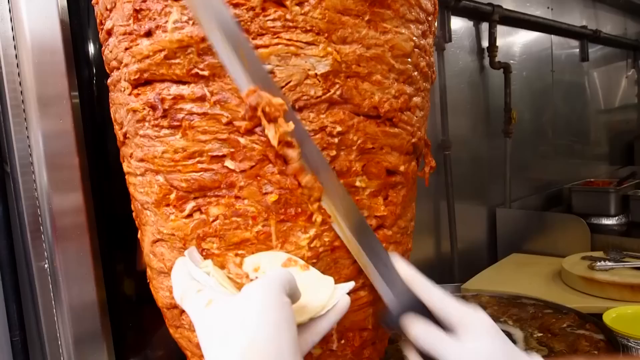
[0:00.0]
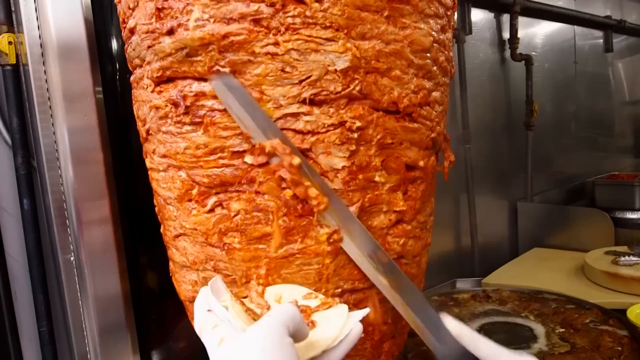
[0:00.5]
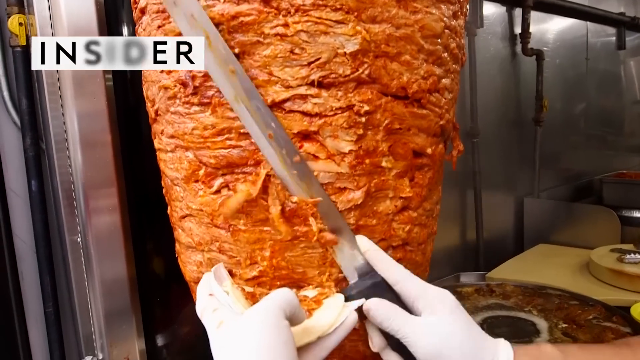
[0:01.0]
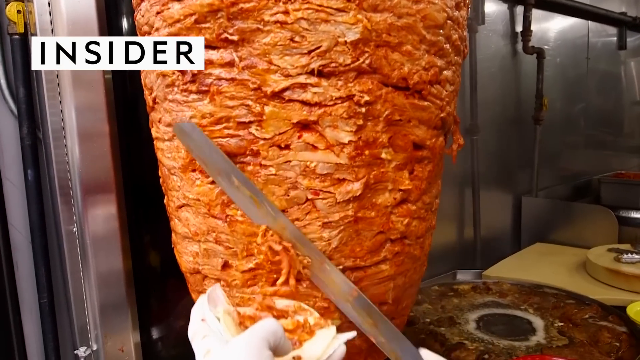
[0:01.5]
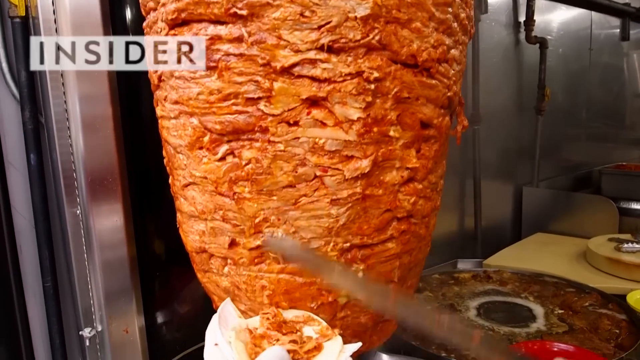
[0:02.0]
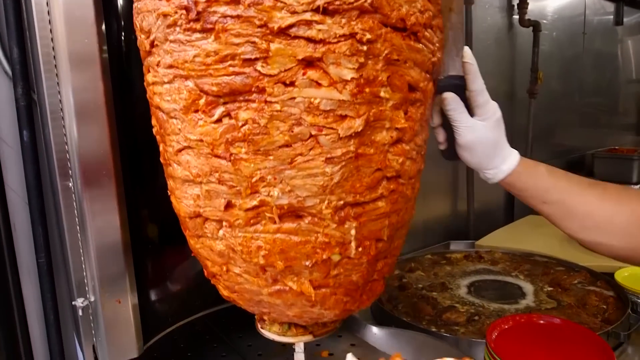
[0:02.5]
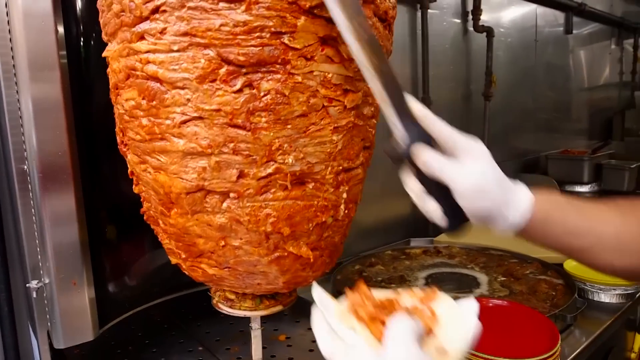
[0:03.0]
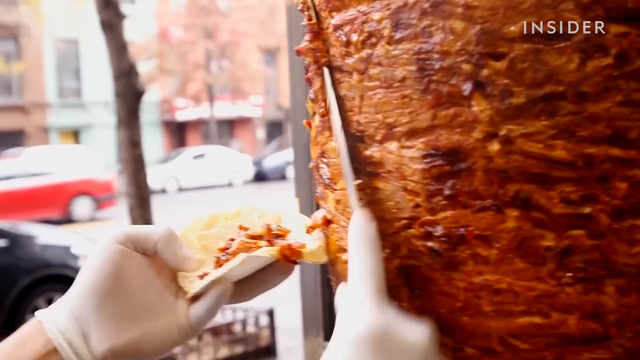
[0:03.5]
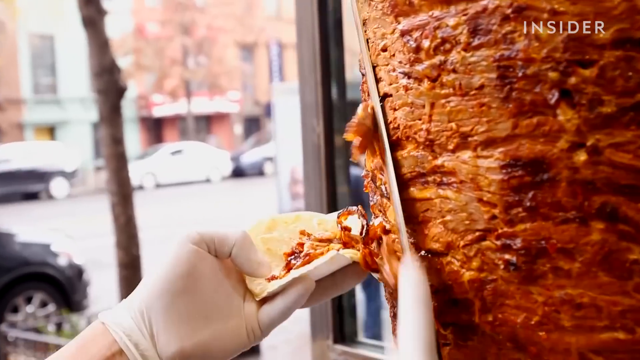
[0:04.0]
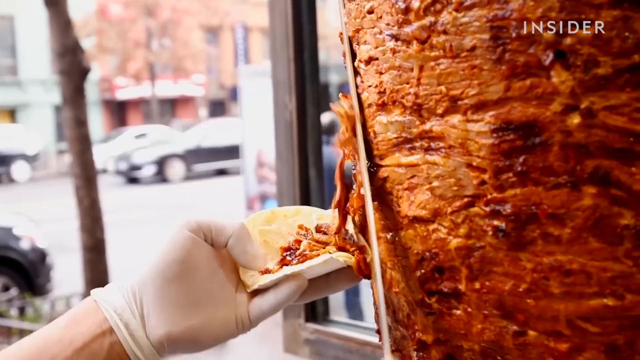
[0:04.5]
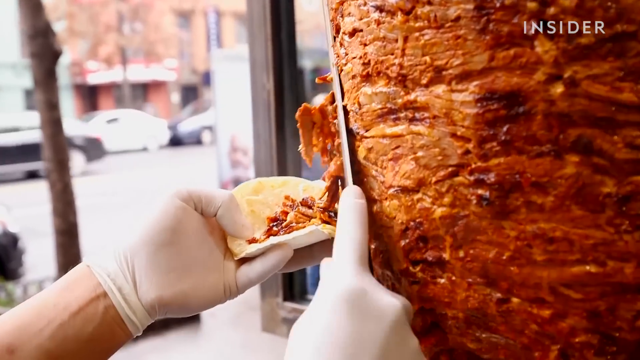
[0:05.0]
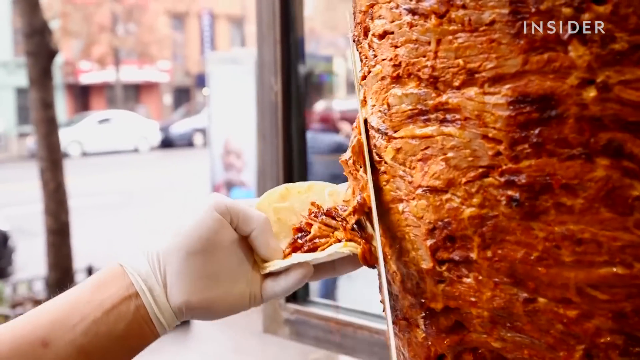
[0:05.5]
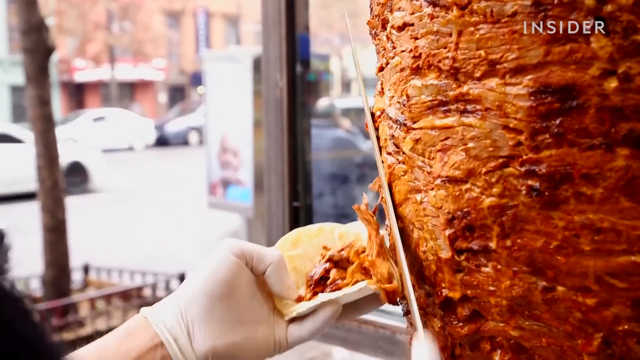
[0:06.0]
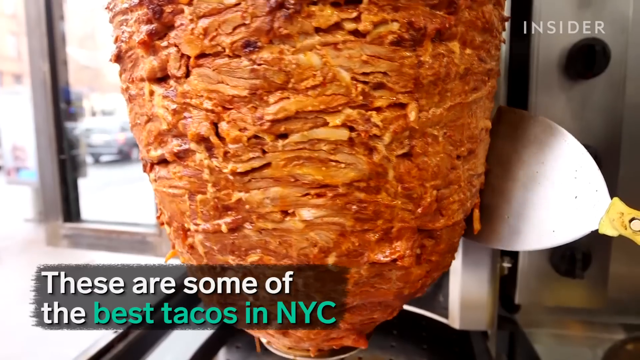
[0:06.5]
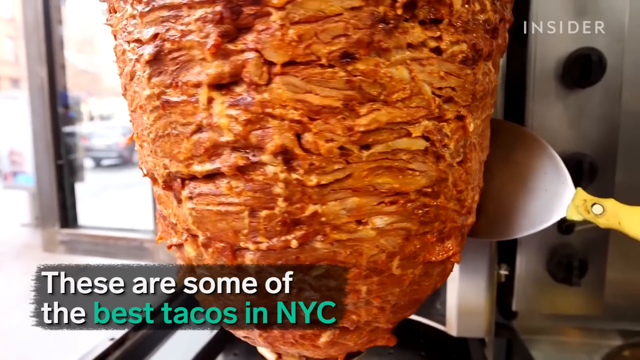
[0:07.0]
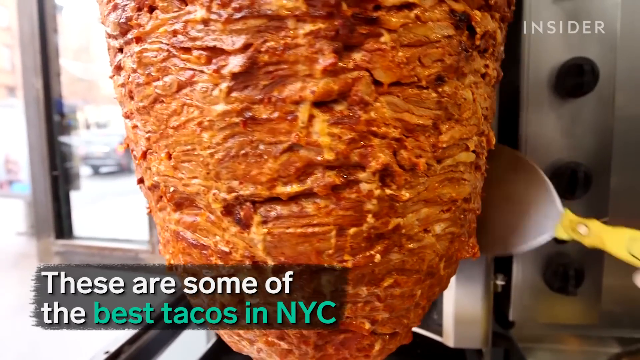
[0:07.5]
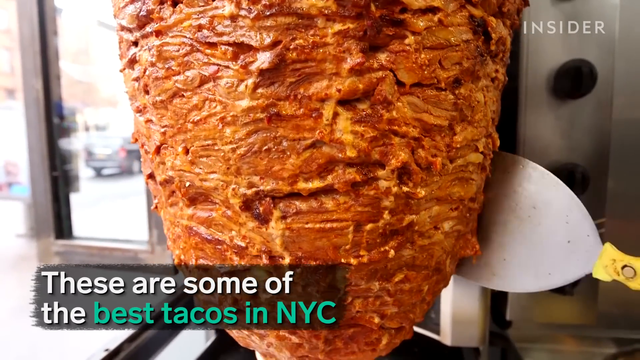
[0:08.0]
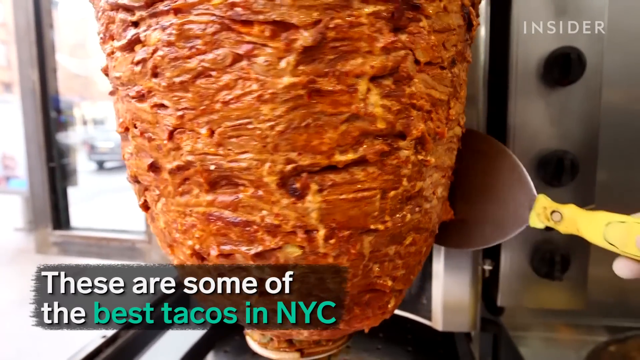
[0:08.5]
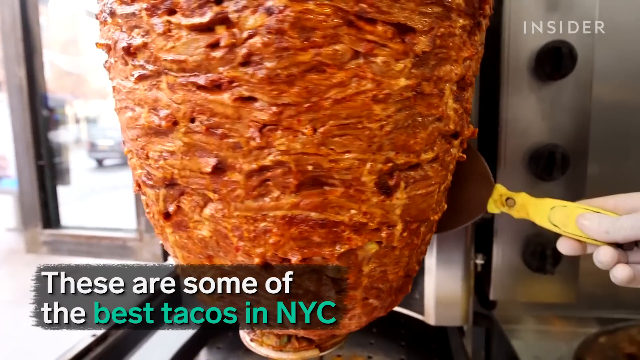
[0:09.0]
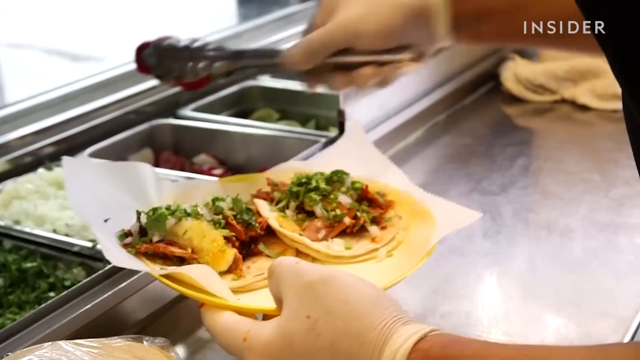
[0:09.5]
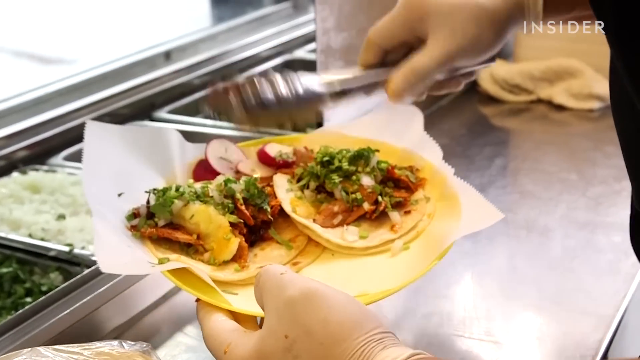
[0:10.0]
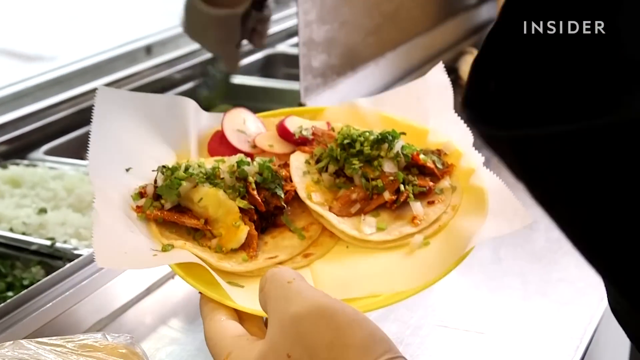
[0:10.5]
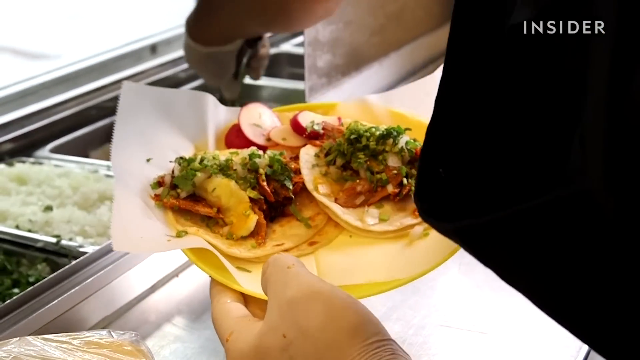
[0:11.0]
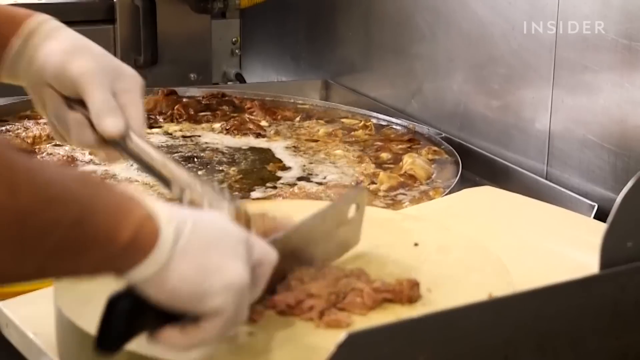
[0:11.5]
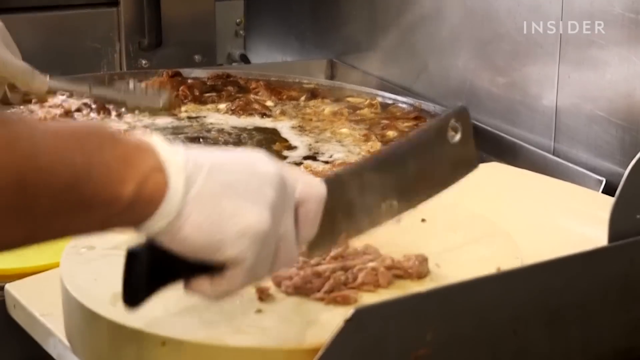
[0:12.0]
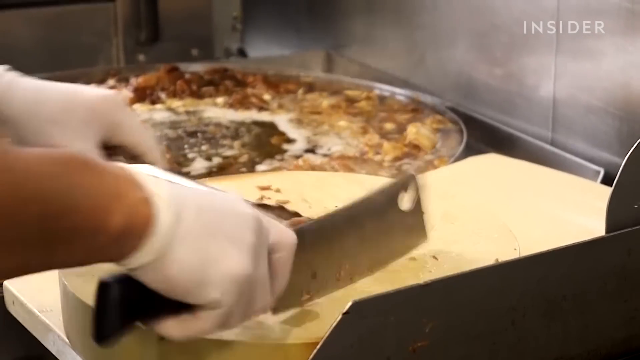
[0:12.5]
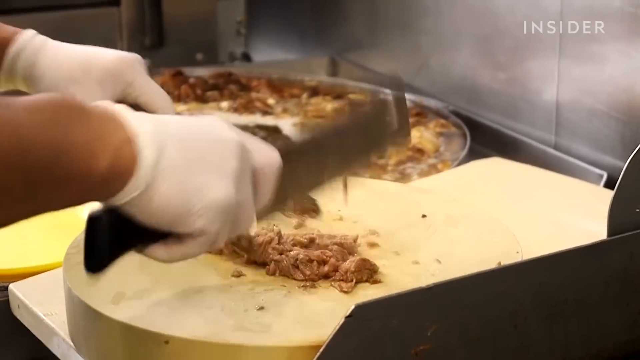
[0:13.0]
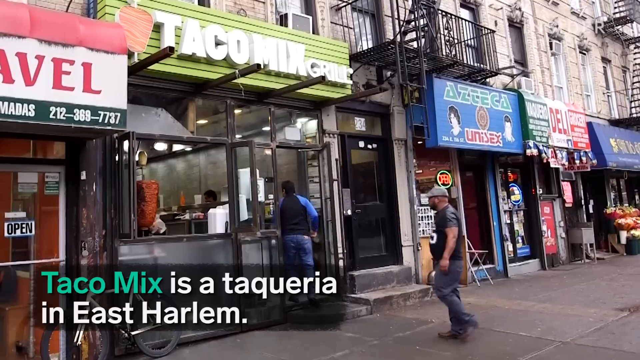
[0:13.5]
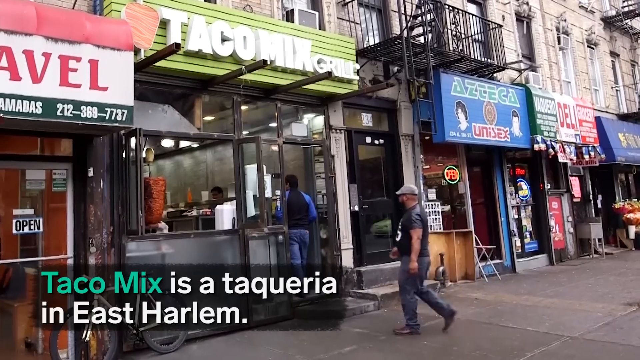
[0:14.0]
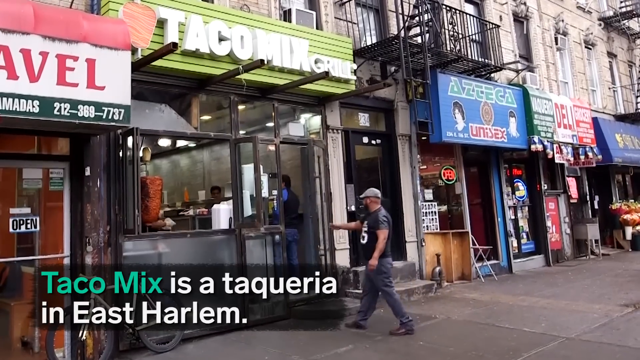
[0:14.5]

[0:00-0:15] The video opens inside a restaurant-type place, where a big hunk of meat hangs down from the ceiling or something similar. Someone wearing white gloves slices away at the meat by the window, with big windows next to it, and the slices land in a little mini corn tortilla shell. The text "INSIDER" appears on the video, followed by "these are some of the best tacos in NYC." Stainless steel containers come into view as more ingredients, apparently some lettuce-type stuff, are added to the taco. Someone with a big vat is kind of chopping up the meat. Then the outside of the place is shown: it is called "Taco Mix" and the text says it is in East Harlem. It is a small place set in a little side of the wall, with lots of storefronts around it in what looks like a pretty busy area, and some people walk into the building from the street.